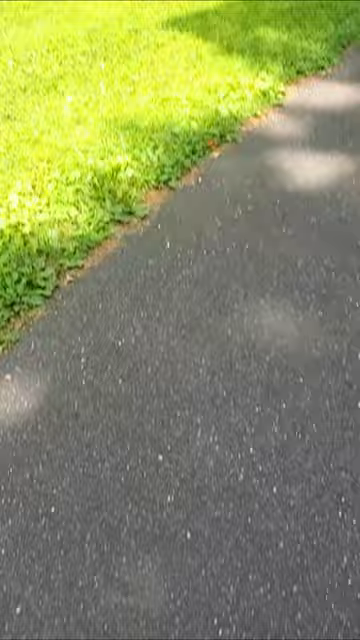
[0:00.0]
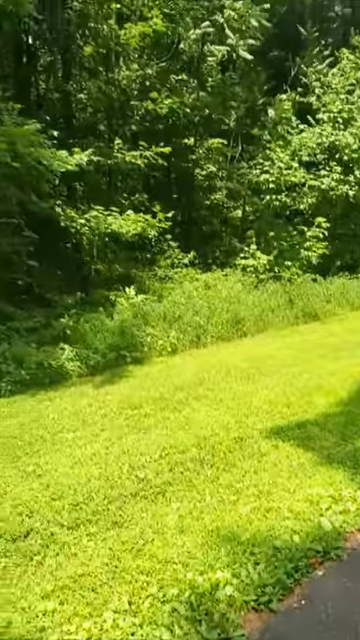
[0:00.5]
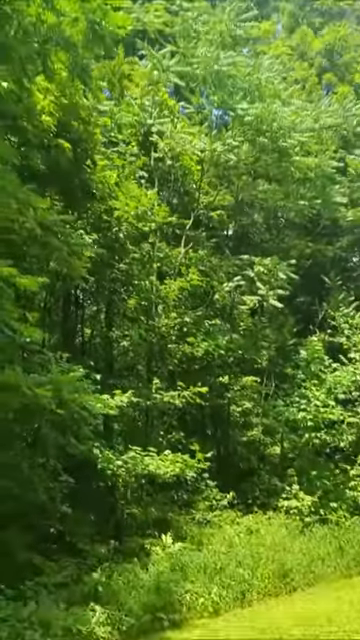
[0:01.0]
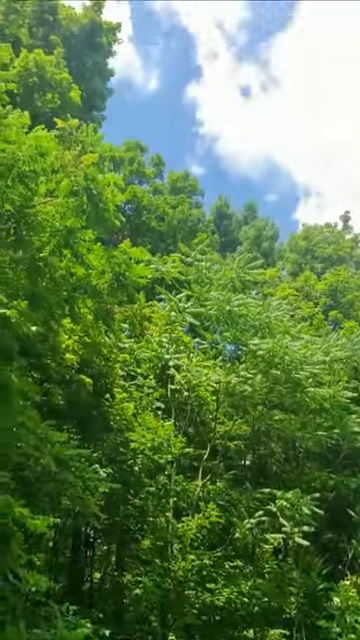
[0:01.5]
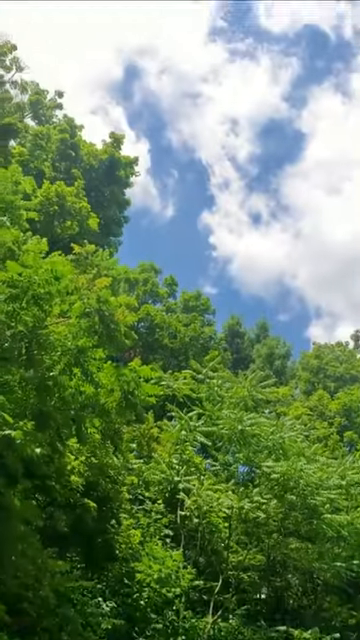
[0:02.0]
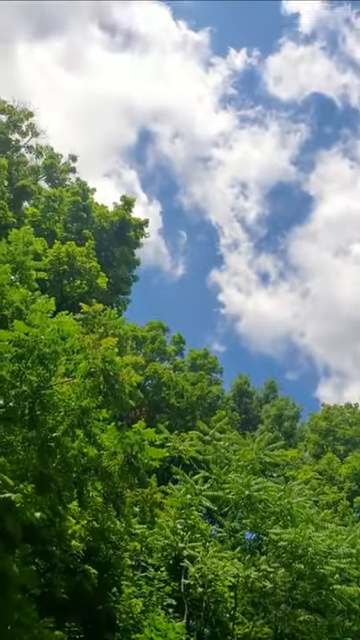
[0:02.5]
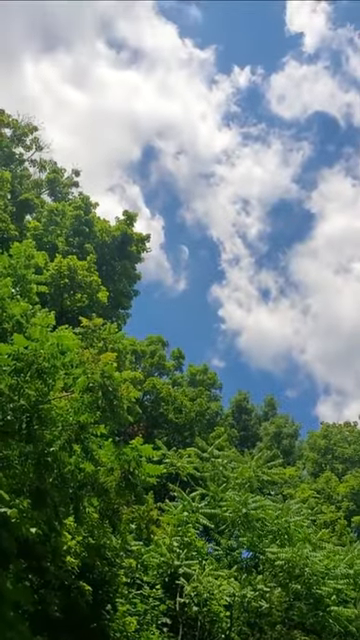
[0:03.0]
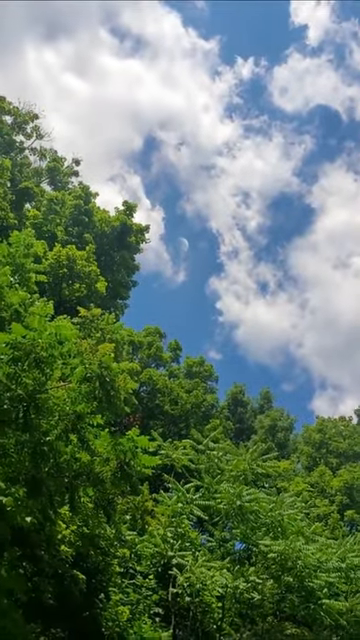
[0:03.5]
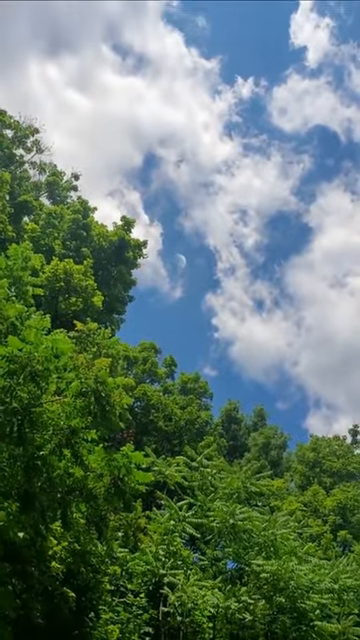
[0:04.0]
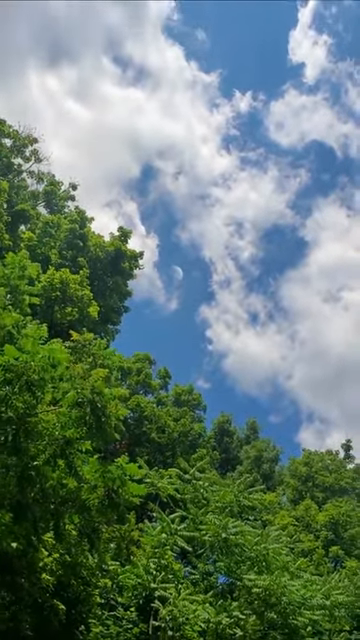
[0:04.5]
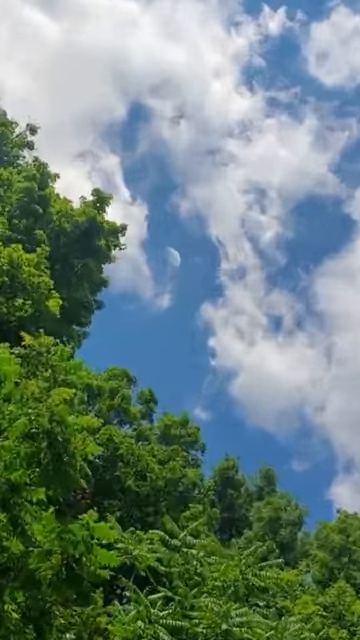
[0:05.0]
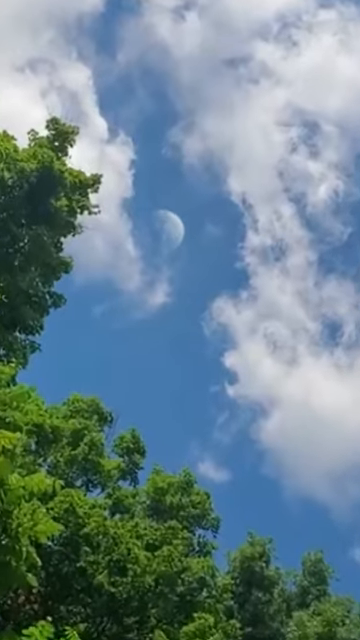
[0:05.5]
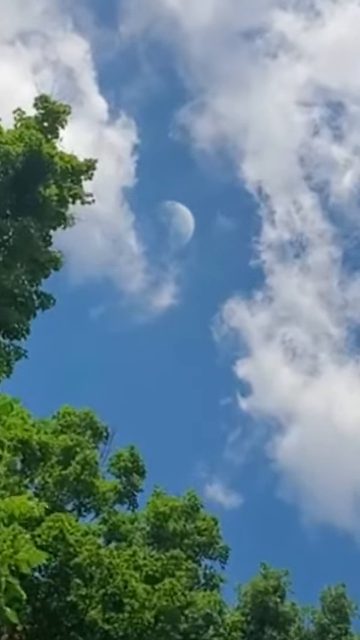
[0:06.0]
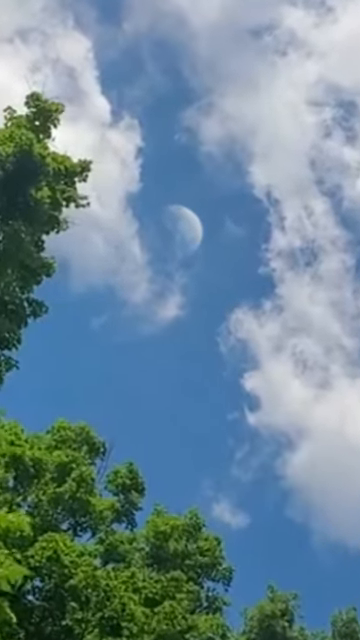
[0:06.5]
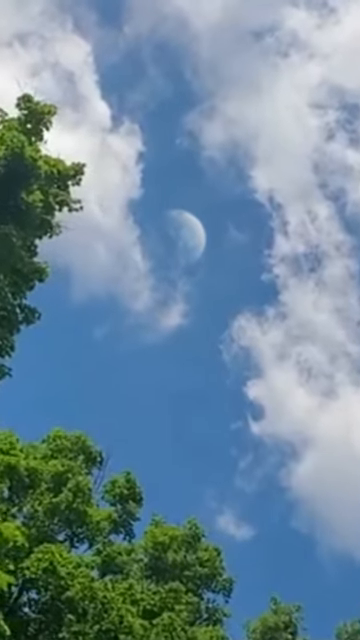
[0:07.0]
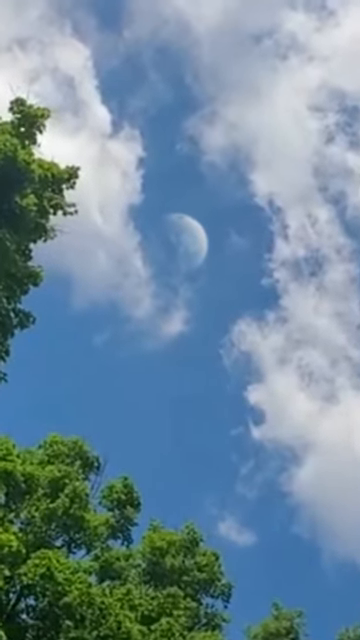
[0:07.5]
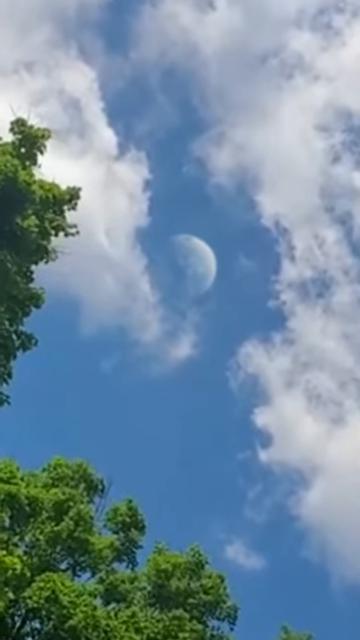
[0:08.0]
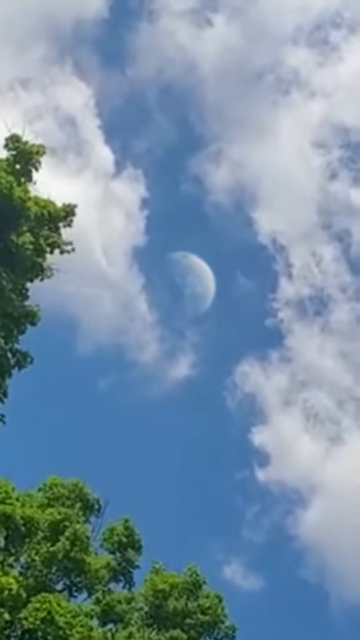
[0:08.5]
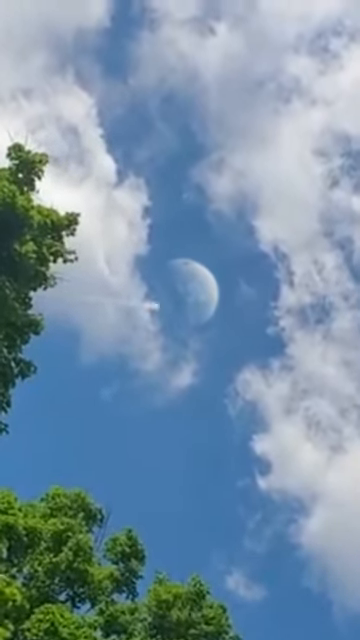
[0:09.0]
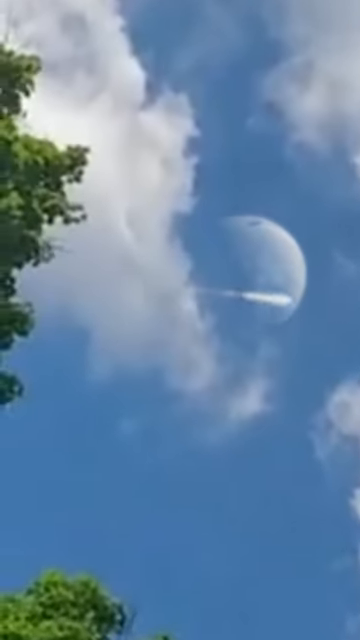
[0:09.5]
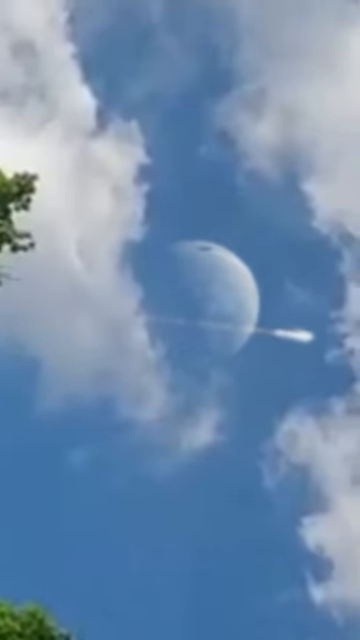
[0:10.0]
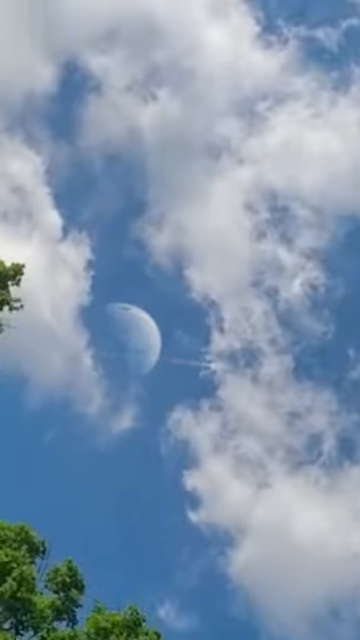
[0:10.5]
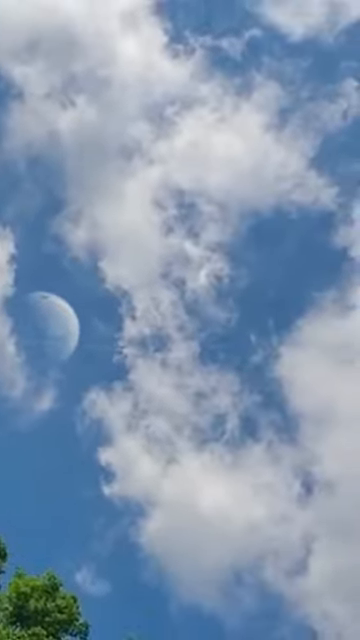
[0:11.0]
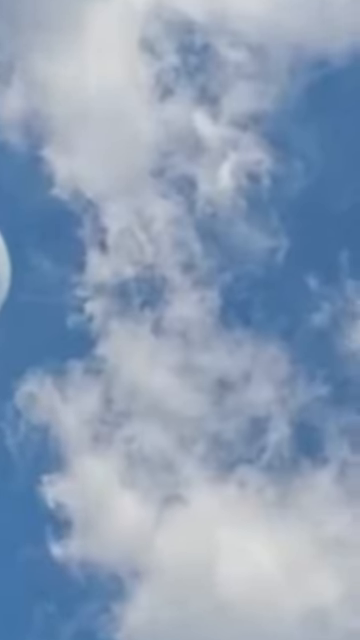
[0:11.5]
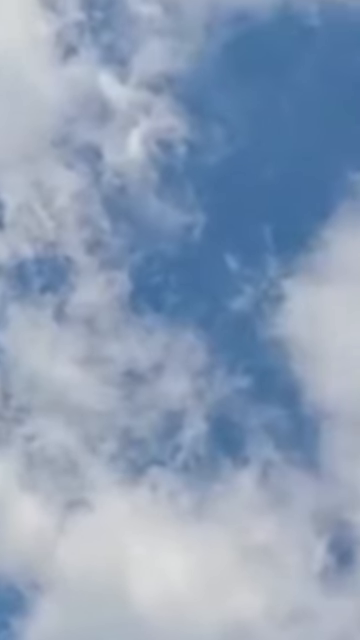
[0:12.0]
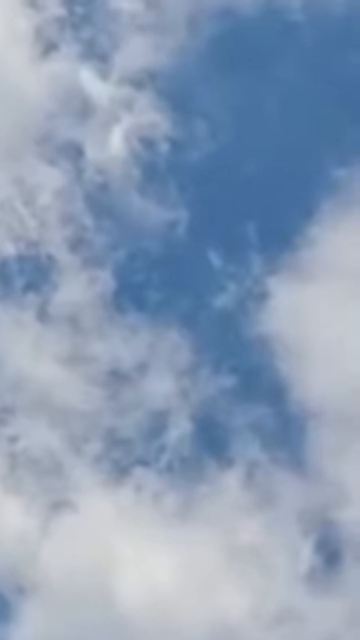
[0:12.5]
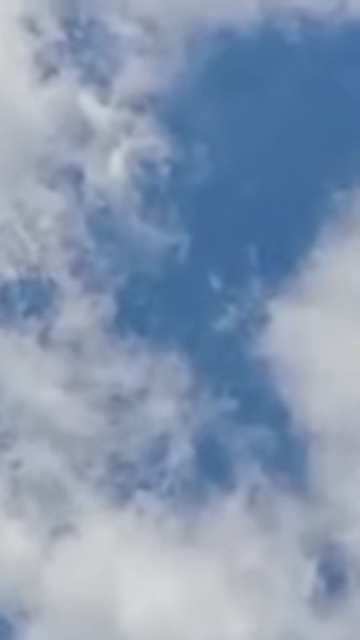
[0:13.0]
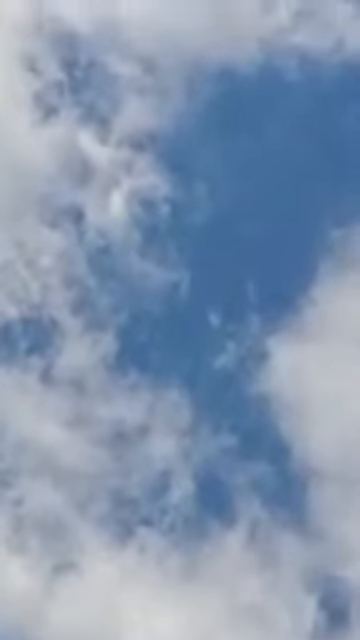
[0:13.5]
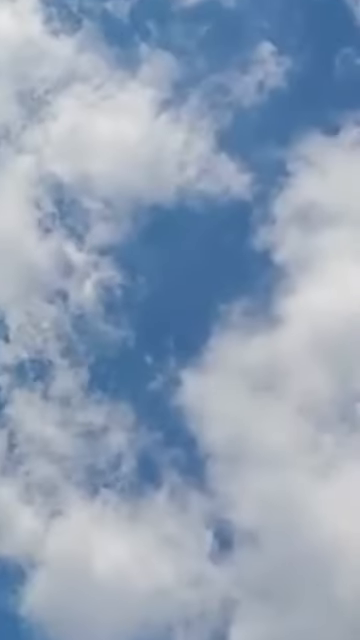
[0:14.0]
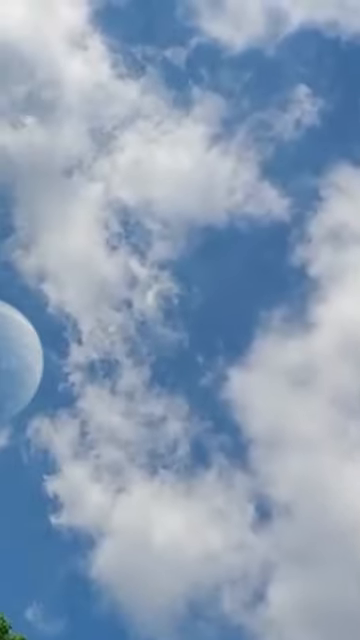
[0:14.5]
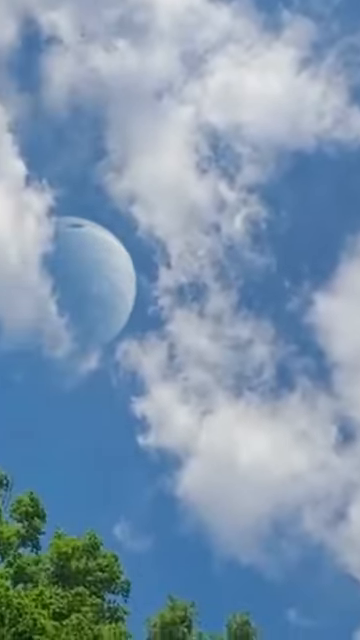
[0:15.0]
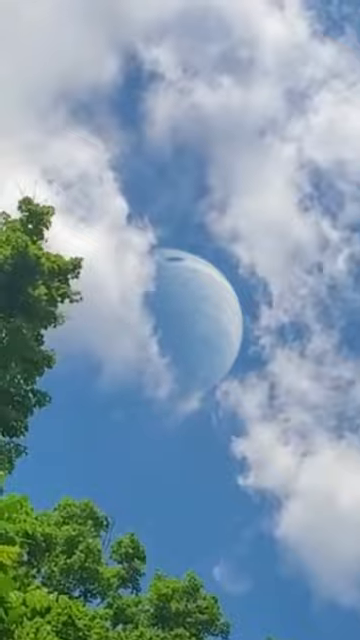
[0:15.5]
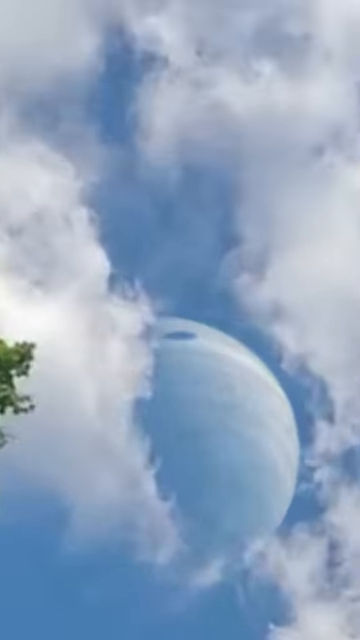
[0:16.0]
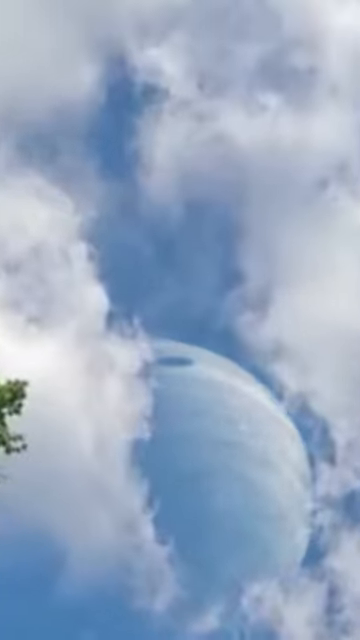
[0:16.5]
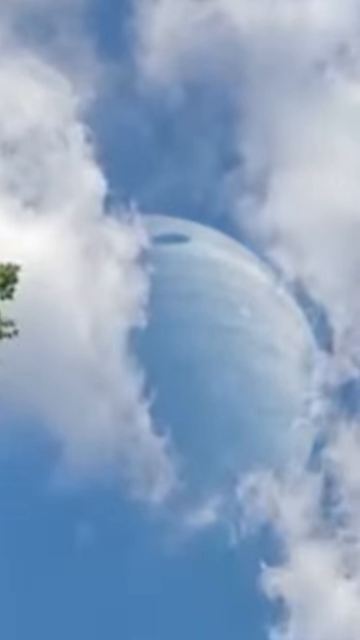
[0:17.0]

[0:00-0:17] On a sunny day with green trees, white clouds and a blue sky, someone appears to be walking along a path and then films the sky. Text on the screen reads "Jupiter falls on Earth caught on camera." As the camera points up, a planet that looks blue with a white mist around it appears to become larger and larger. A streak of something crosses from left to right. The round object, which looks like a planet, keeps getting larger and closer; it has a spot on it that looks like a crater. The planet appears to be falling to Earth.